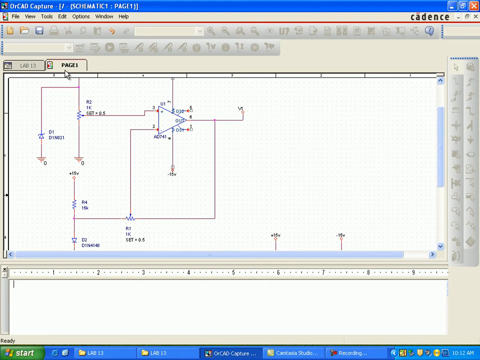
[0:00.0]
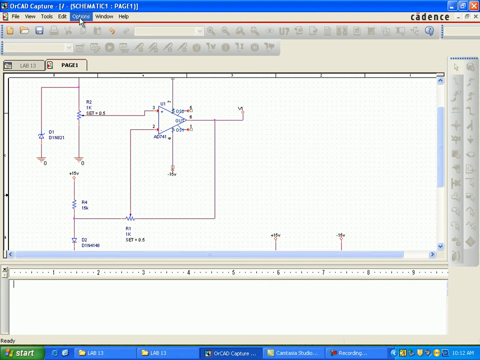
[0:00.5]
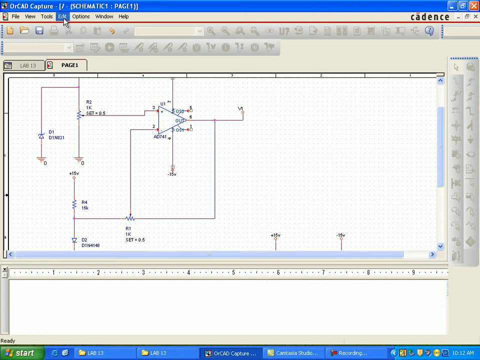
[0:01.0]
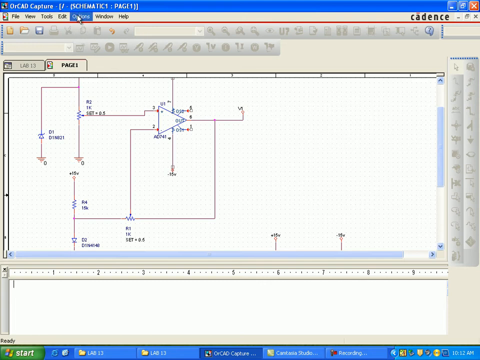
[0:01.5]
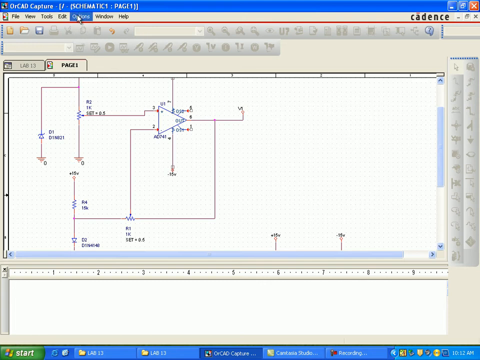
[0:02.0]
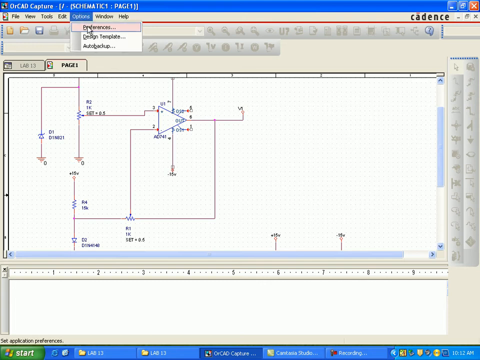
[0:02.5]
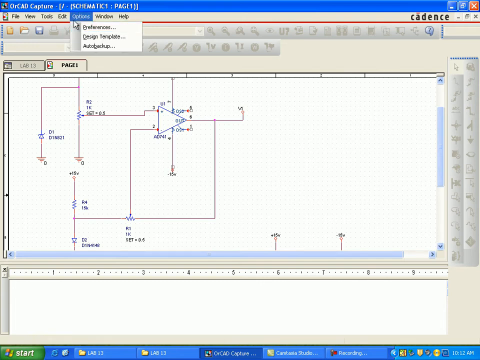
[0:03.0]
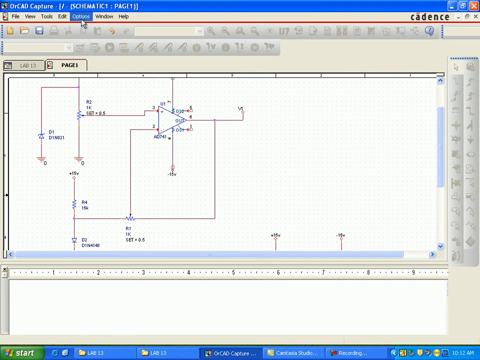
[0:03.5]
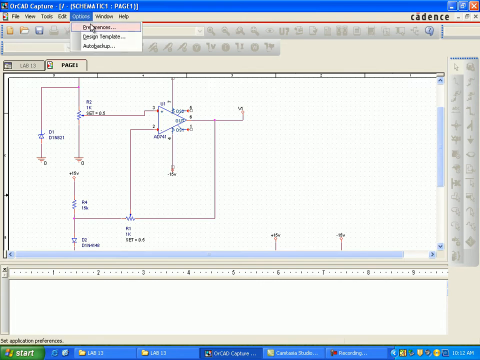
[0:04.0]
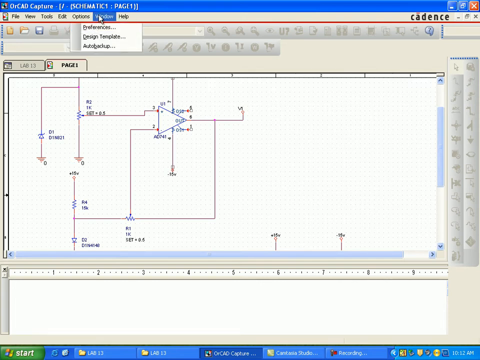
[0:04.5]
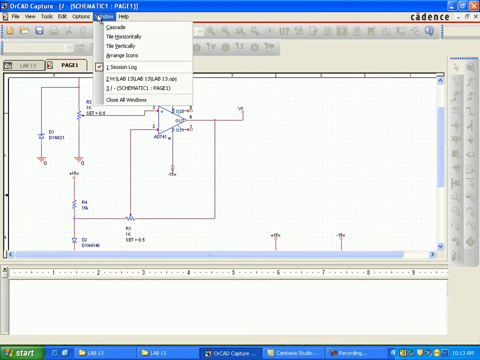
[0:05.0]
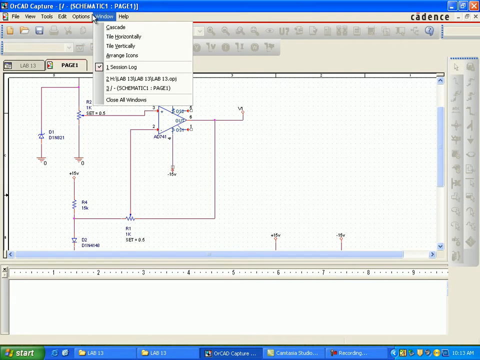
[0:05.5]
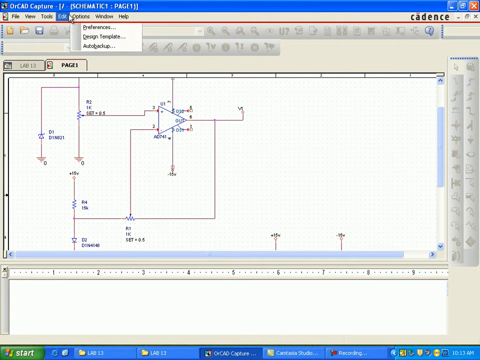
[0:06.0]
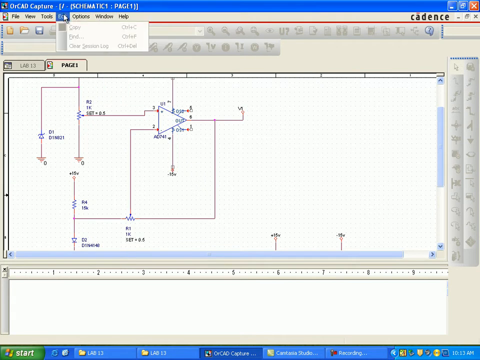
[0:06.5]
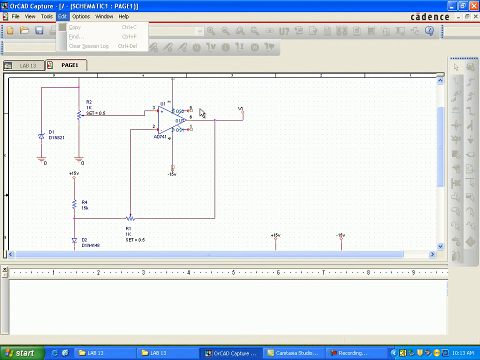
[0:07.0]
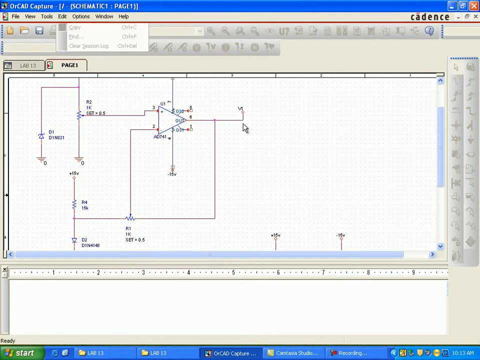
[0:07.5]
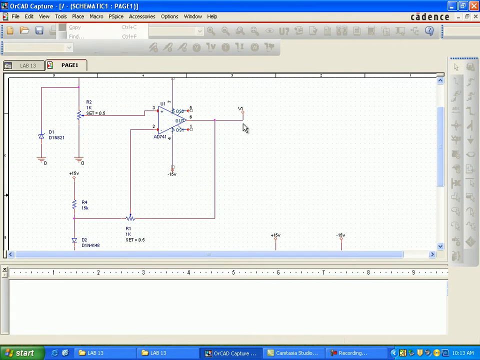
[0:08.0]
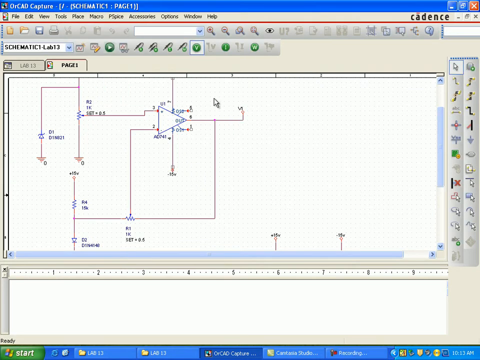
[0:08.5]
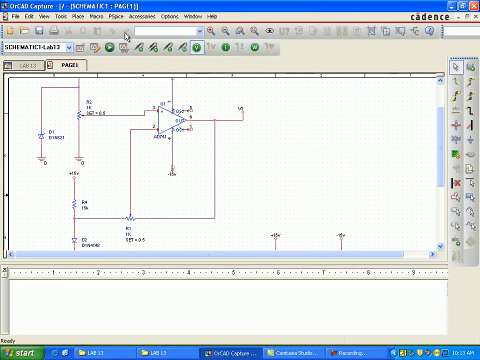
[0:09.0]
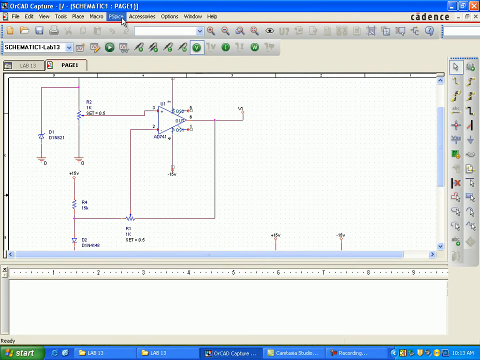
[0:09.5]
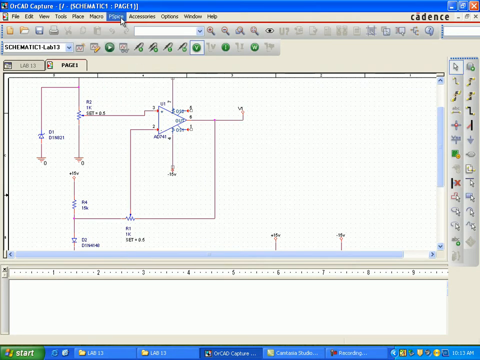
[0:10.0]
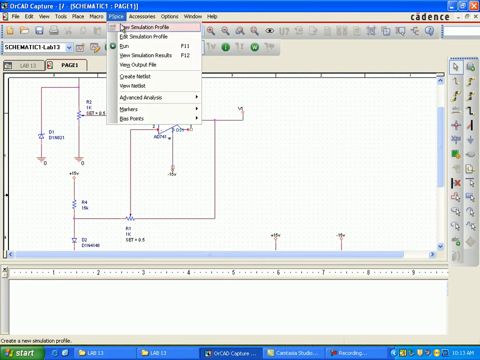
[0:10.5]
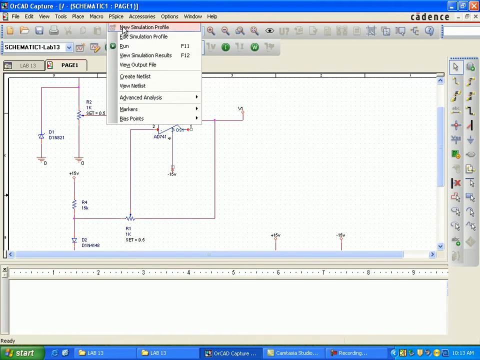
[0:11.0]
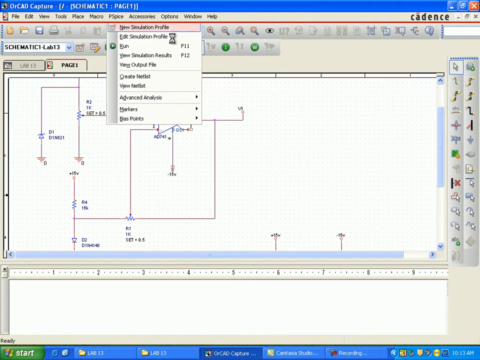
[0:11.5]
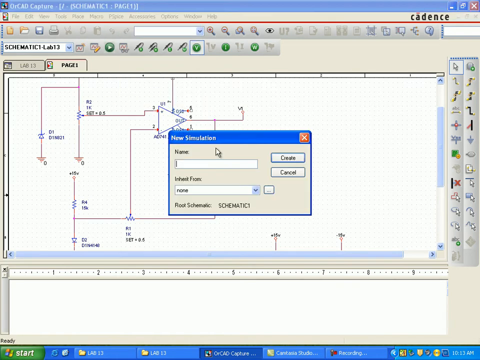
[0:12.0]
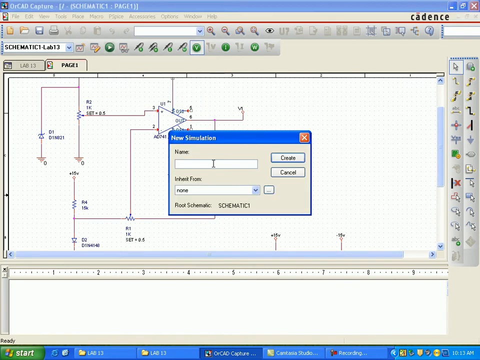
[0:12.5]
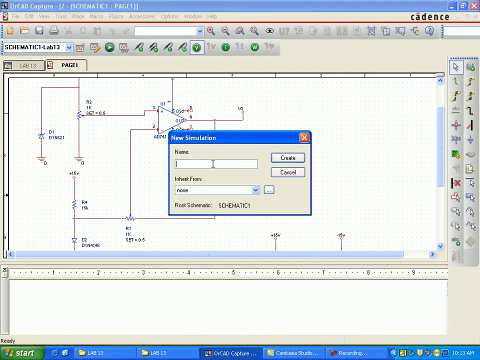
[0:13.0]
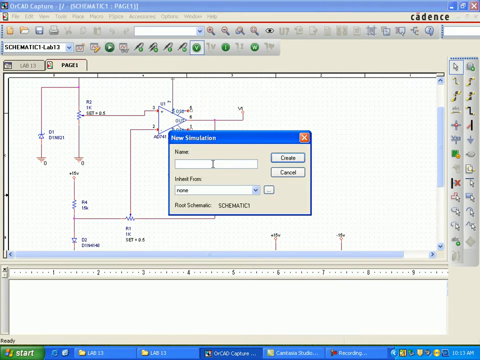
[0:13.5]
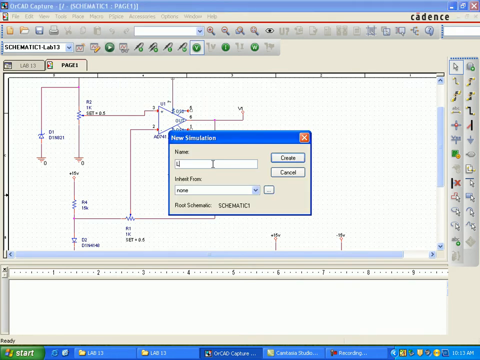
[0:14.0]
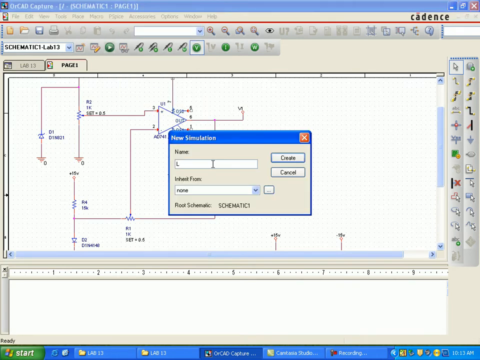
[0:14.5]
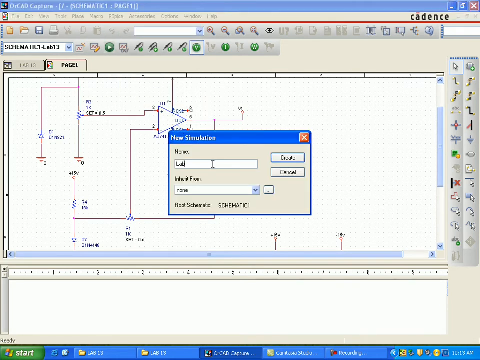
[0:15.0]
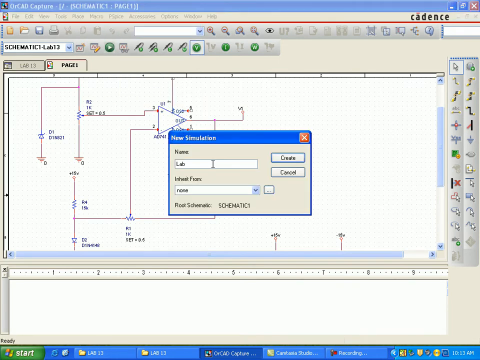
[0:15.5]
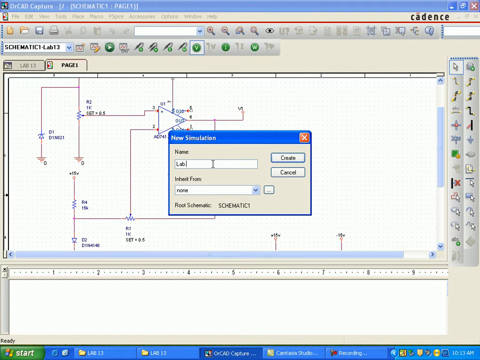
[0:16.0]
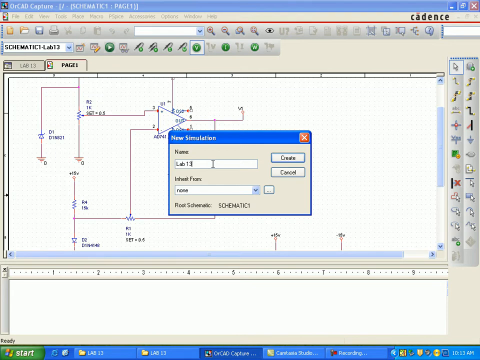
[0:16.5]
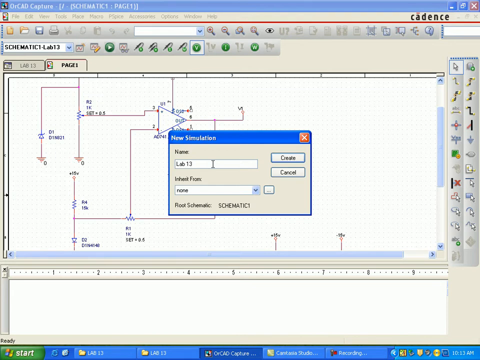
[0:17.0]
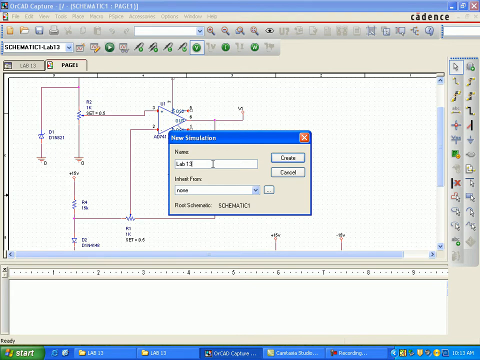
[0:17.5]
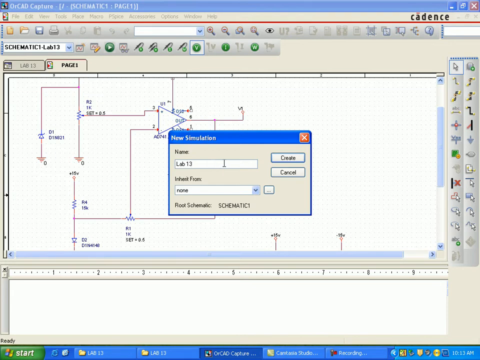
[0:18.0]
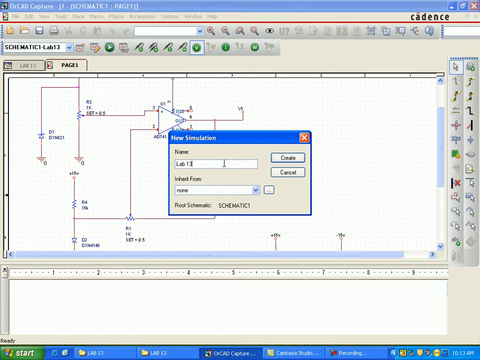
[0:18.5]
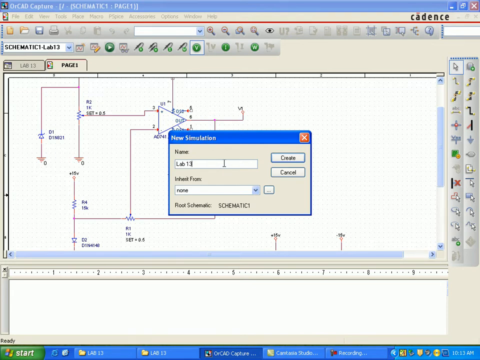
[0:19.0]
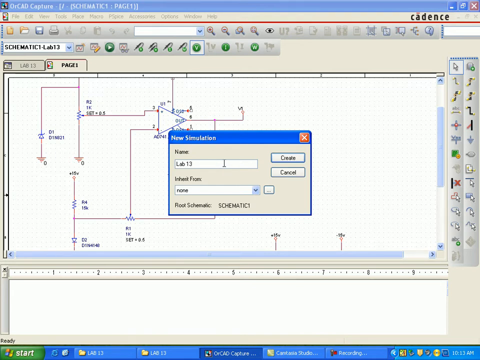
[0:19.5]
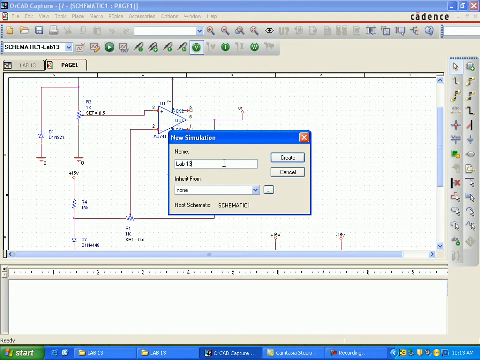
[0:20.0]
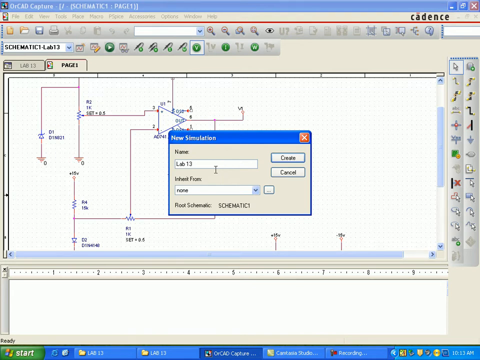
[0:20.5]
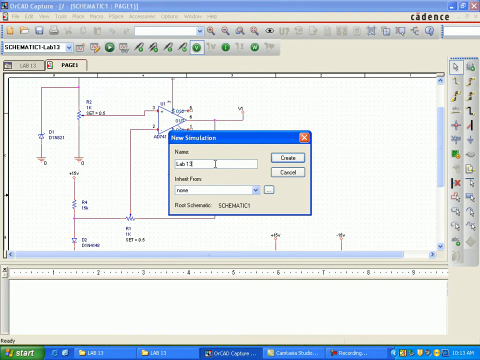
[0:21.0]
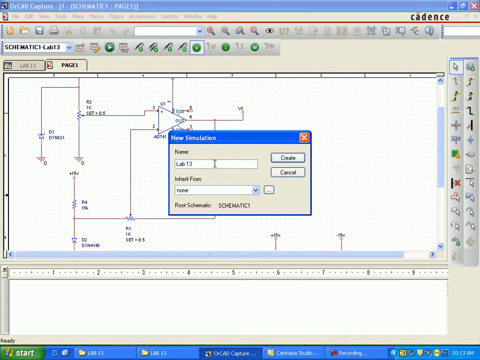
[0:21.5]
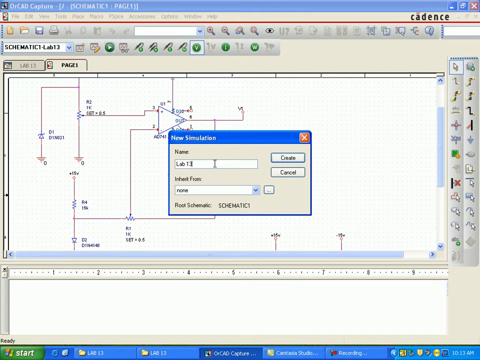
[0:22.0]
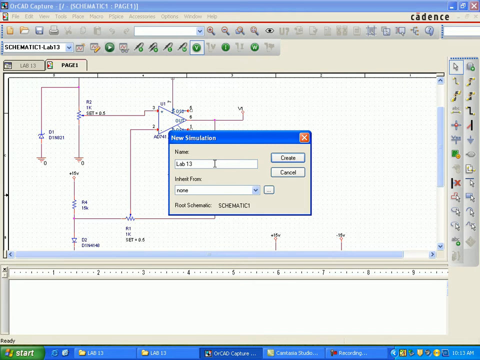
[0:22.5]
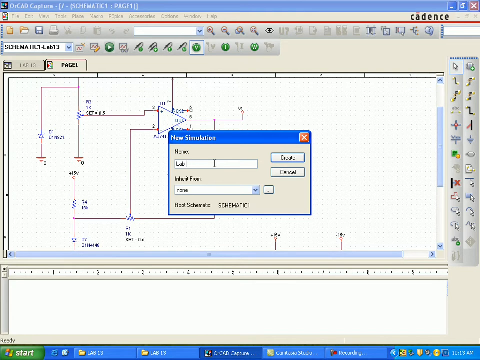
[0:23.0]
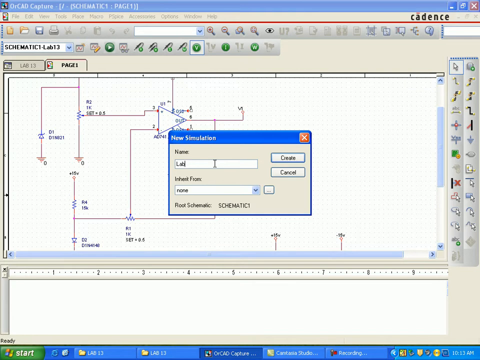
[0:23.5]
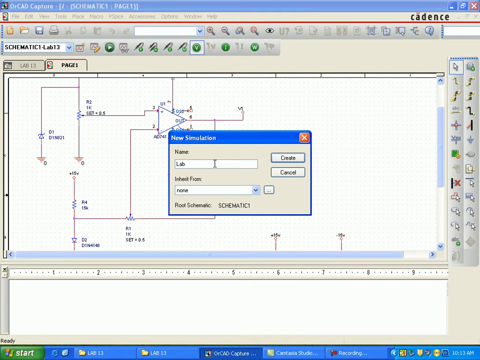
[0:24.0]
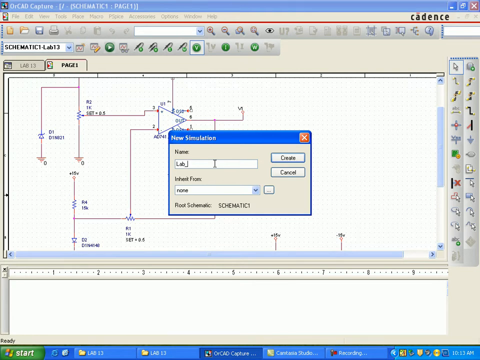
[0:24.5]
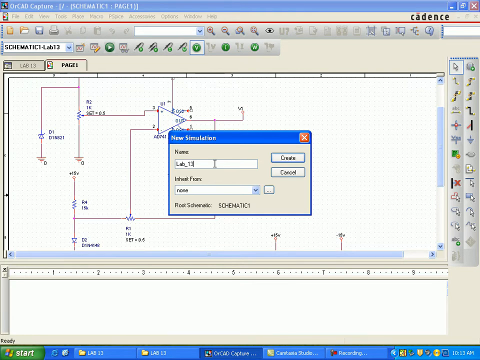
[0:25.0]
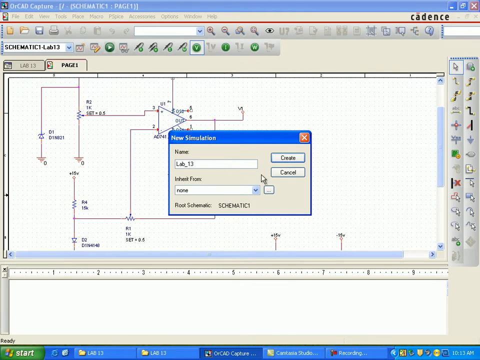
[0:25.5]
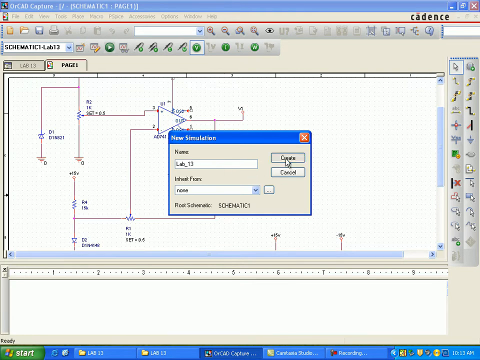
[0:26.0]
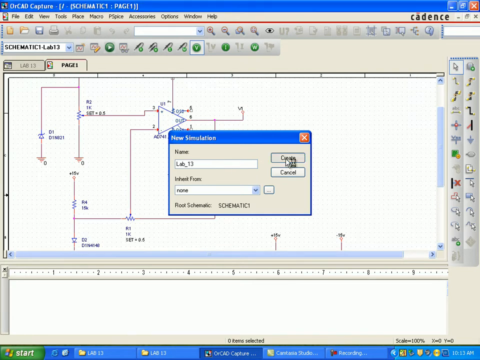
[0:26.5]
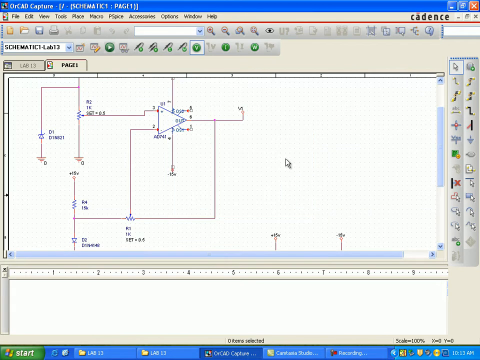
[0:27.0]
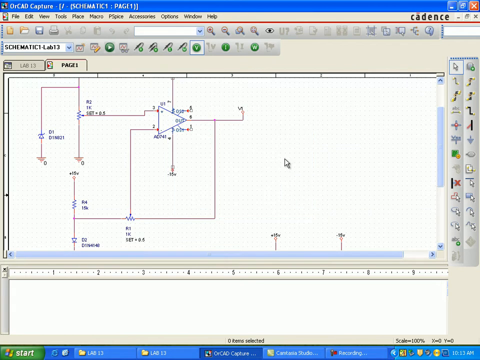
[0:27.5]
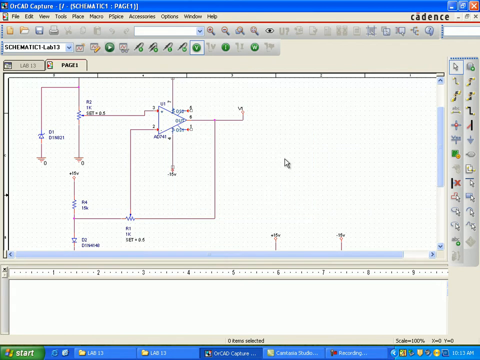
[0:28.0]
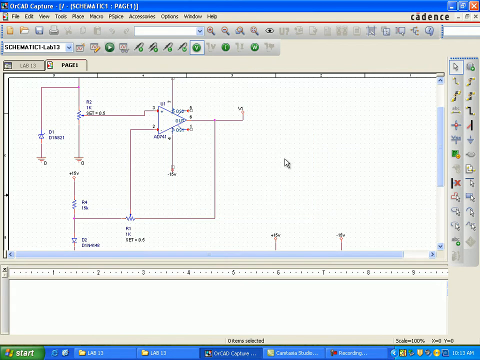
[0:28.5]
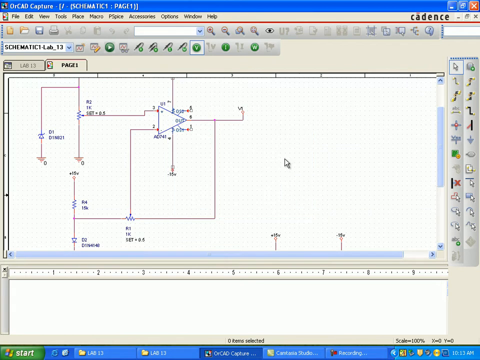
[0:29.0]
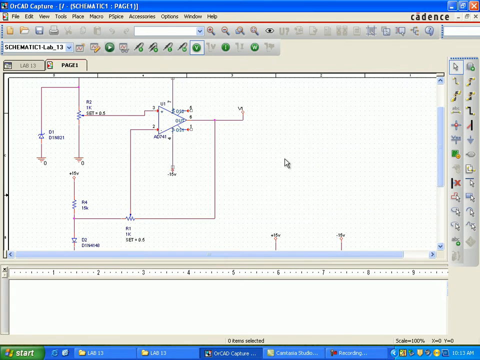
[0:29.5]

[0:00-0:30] At the very beginning, a window that looks like Windows 7 appears, with a bunch of lines scattered all over it, including red lines and a blue triangle. What it is is unclear; it possibly has something to do with programming. At the top, the window is labeled "OVCAD Capture" and "Schematic Page 1". It is some sort of schematic for a simulation: the user goes to the Place tab and clicks on New Simulation Profile. They type in the name Lab 13 and click the Create button, and it looks like something is about to be created.